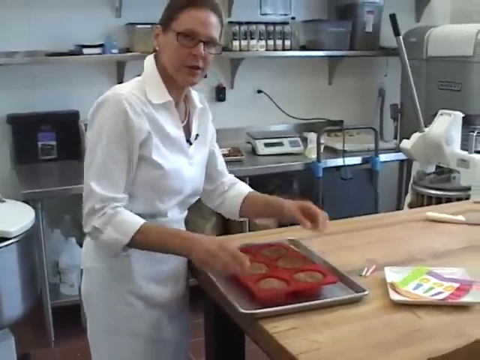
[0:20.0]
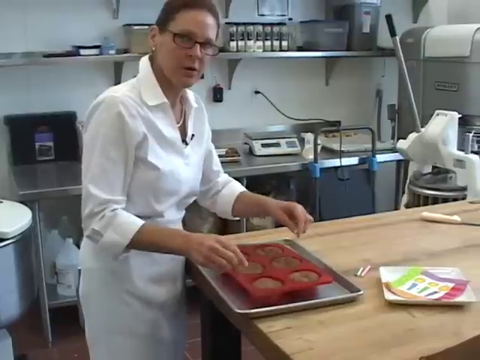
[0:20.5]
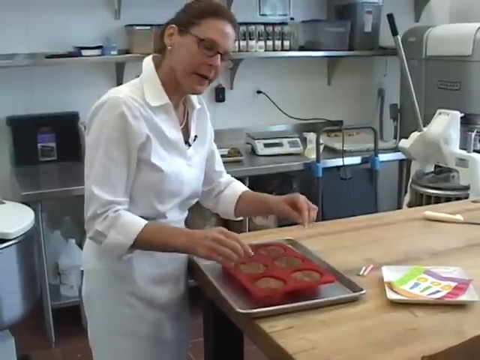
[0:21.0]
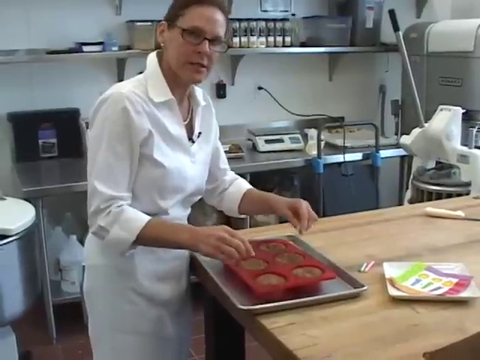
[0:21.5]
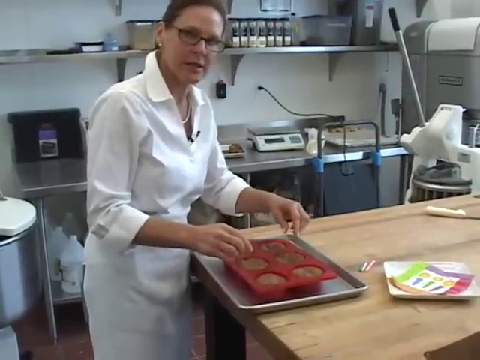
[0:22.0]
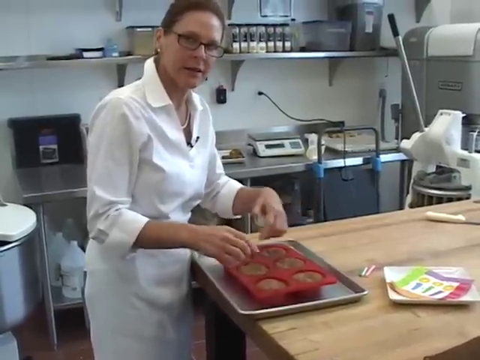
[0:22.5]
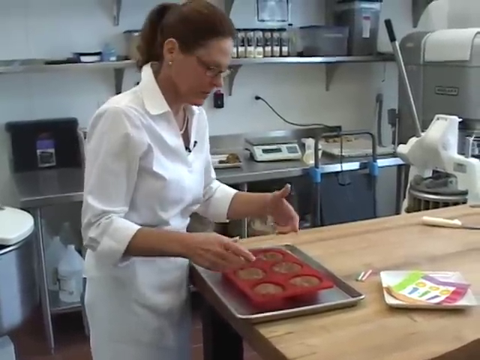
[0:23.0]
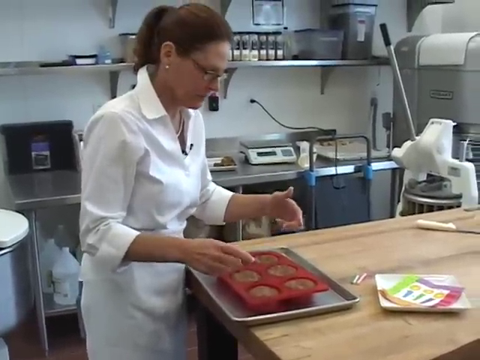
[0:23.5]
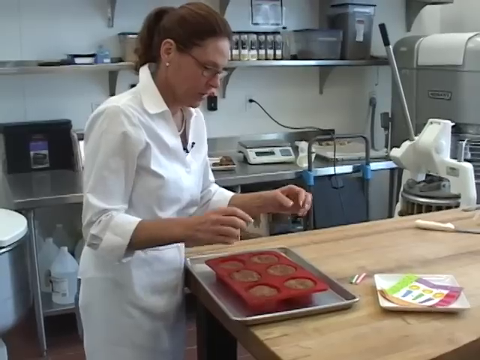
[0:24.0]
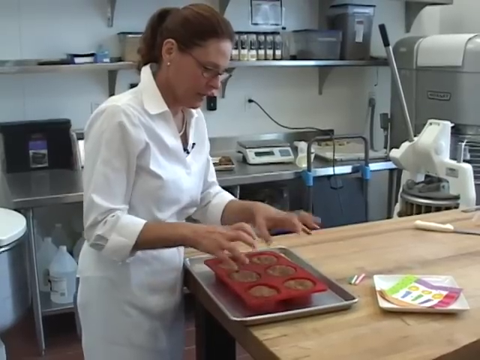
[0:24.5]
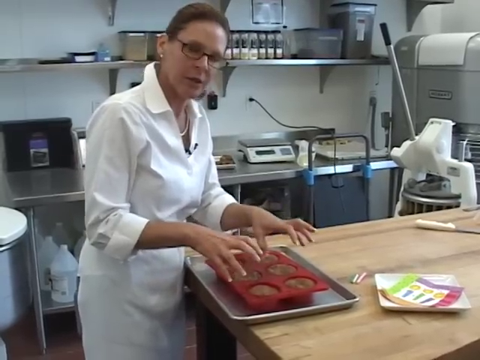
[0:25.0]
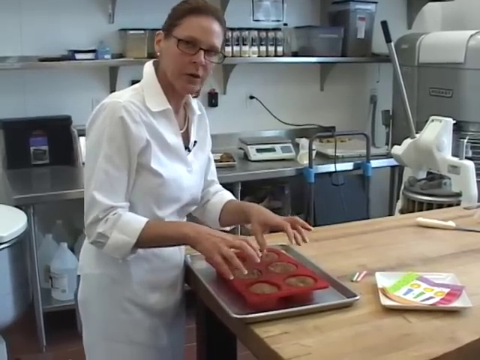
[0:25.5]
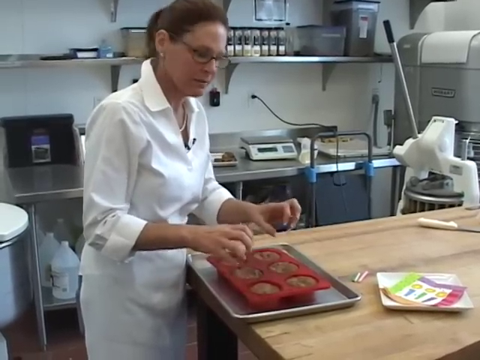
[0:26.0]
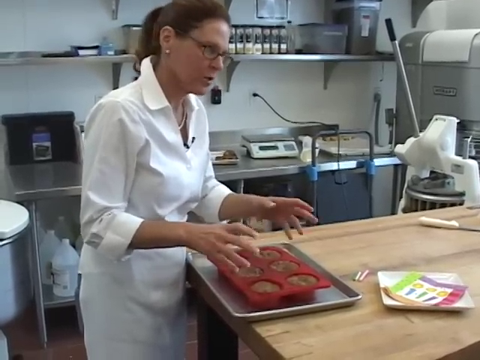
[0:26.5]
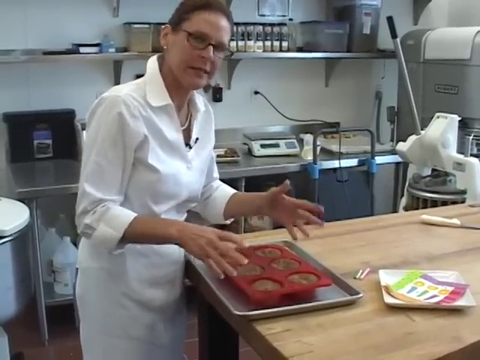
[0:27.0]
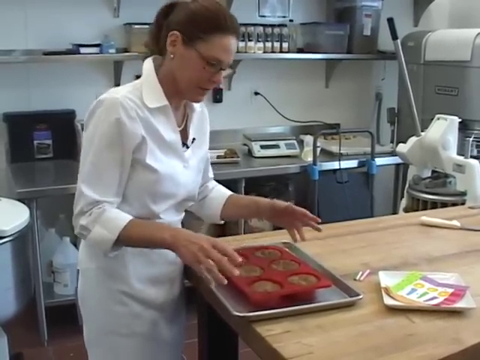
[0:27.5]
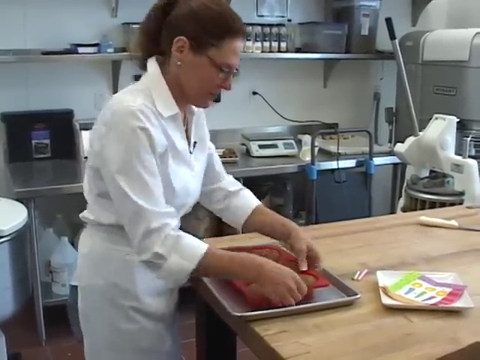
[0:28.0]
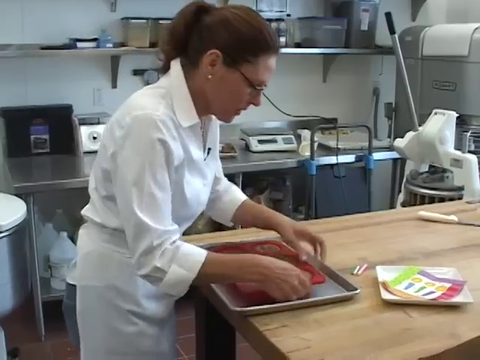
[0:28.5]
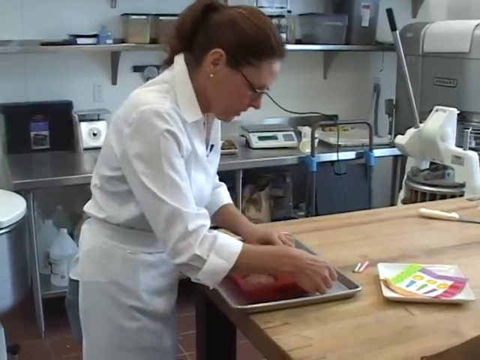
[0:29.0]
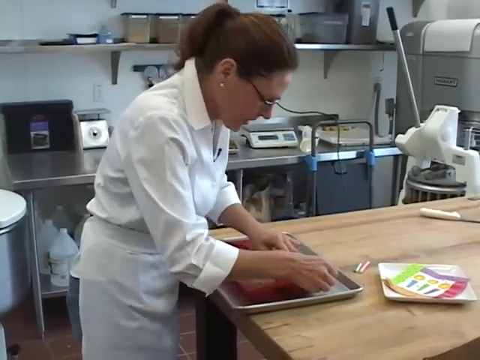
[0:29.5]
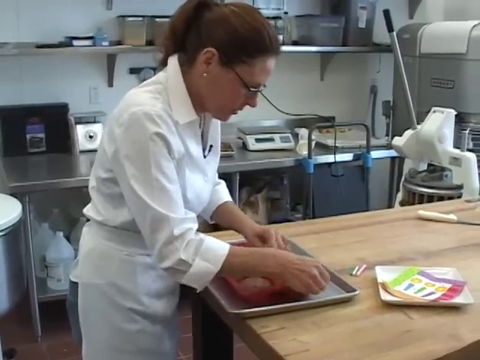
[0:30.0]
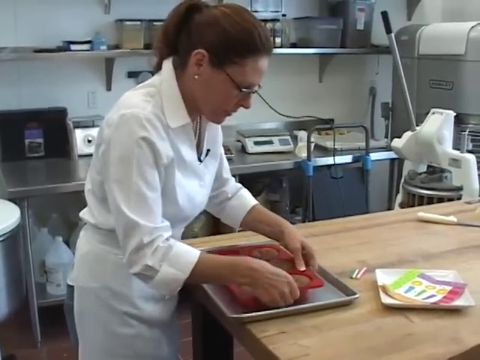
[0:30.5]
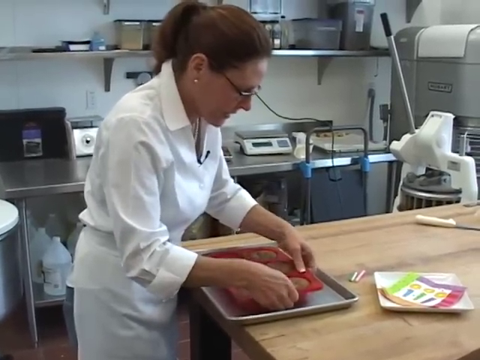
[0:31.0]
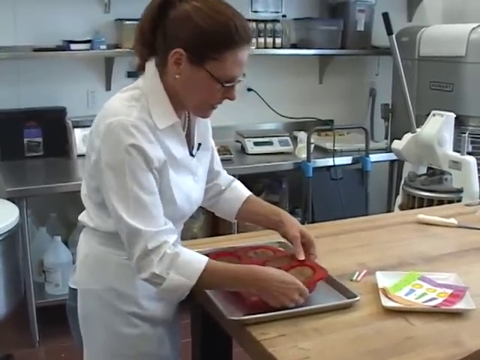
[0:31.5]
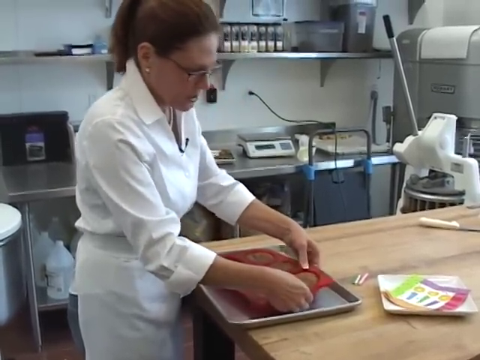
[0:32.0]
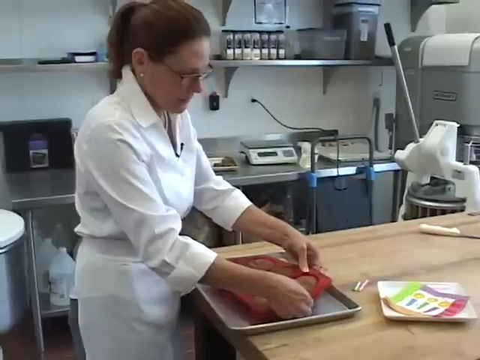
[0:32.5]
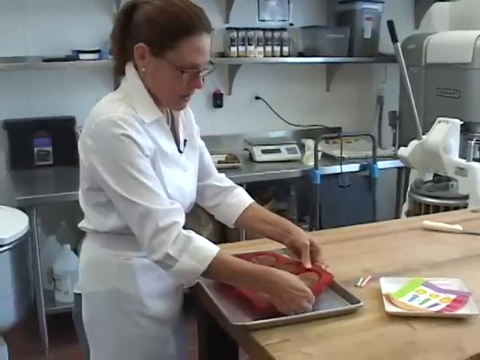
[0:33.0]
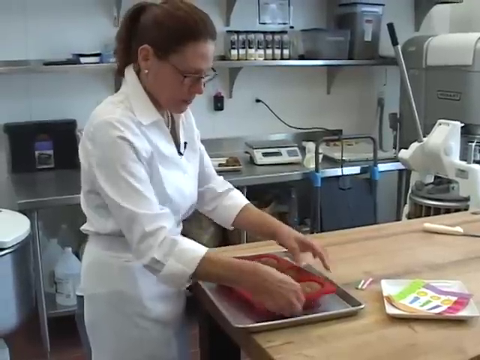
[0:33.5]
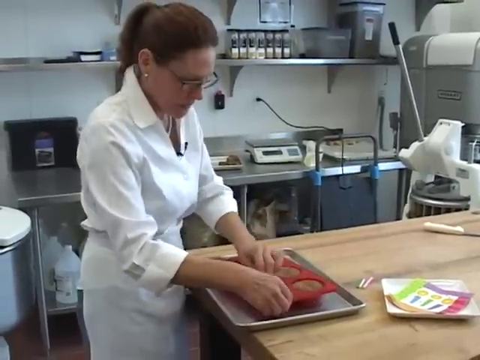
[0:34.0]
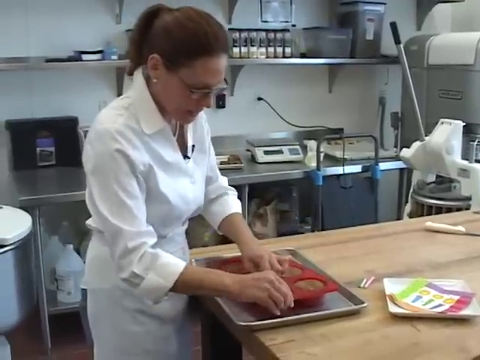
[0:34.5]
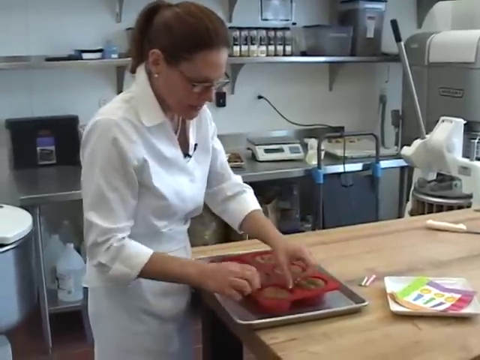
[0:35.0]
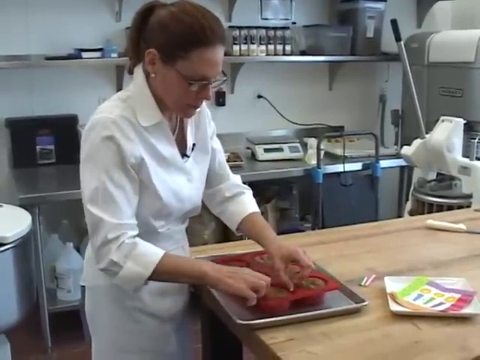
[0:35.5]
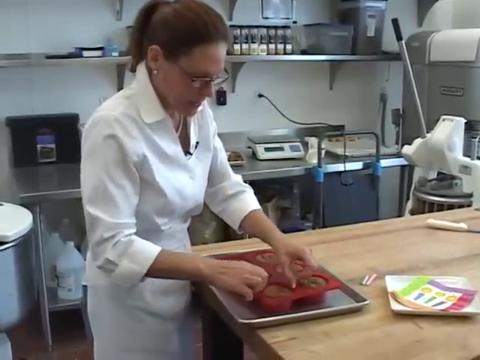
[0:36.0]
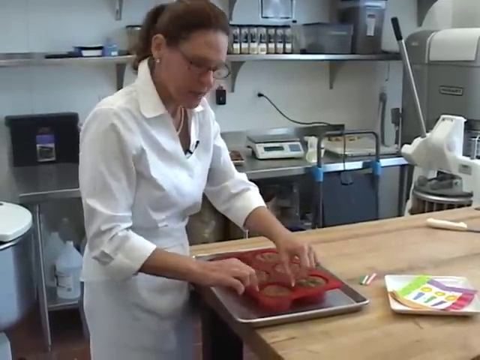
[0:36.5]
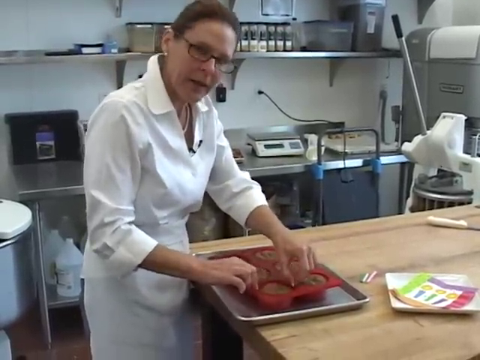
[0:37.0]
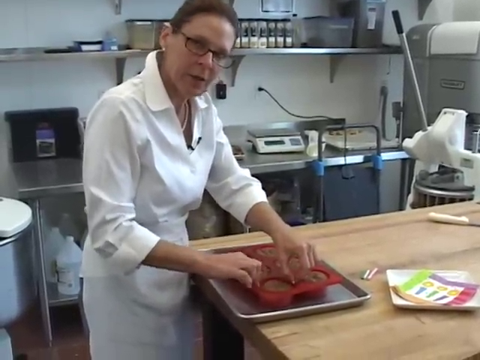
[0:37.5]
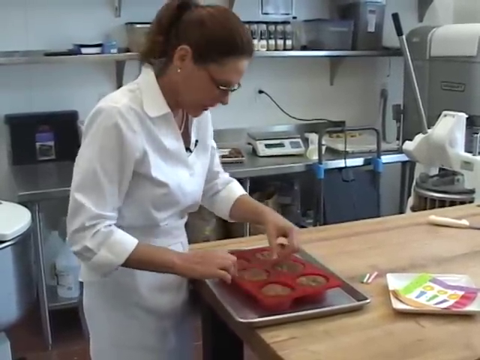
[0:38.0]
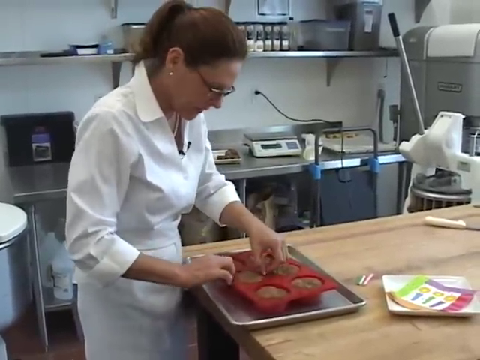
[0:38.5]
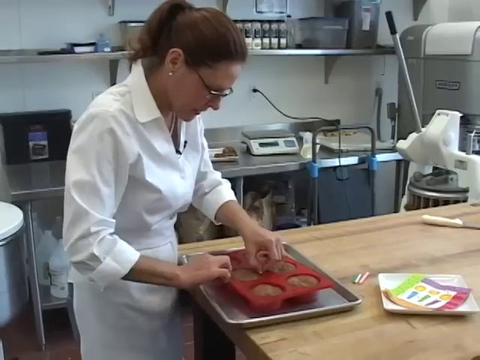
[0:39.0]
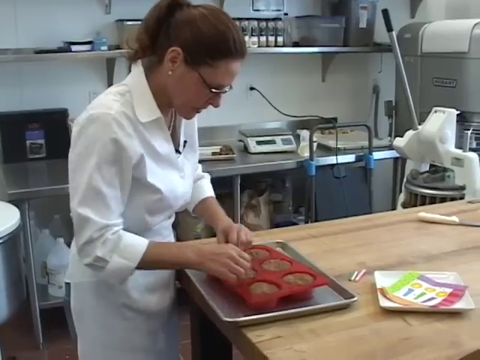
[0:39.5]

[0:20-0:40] The woman holds the red crate with her fingers, stretching it to remove the cupcakes stuck inside. She appears to explain something while pointing at the cupcakes. She starts by removing the first one, in the right corner, and then places all of them down, removing them slowly from the red platter. Nearby is what appears to be a paper towel with many colors, and there is a brown table. In front of her there appear to be two candles. She is dressed in a clean white outfit, as someone who seems to be working with flour and chocolate mixes, wears spectacles, and has her hair tied back. She repeatedly looks at the camera as she explains what she is doing.